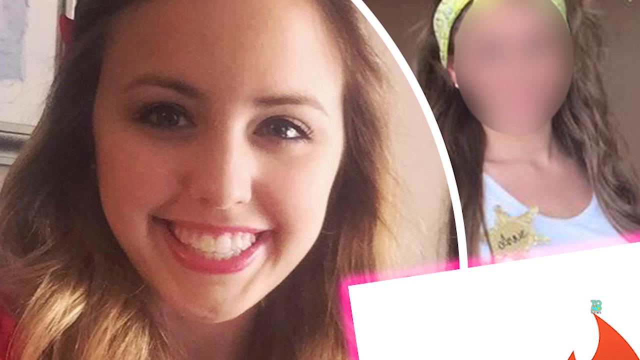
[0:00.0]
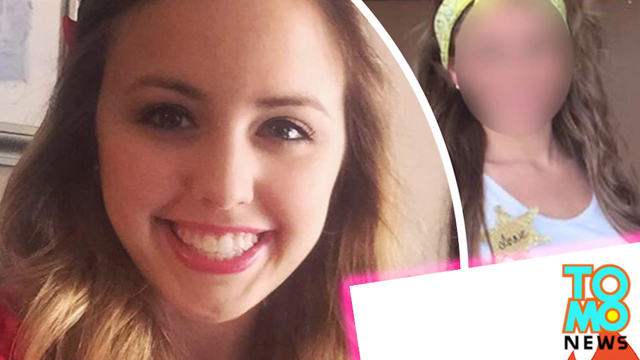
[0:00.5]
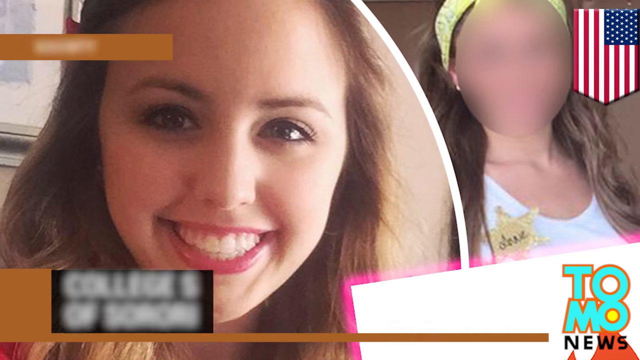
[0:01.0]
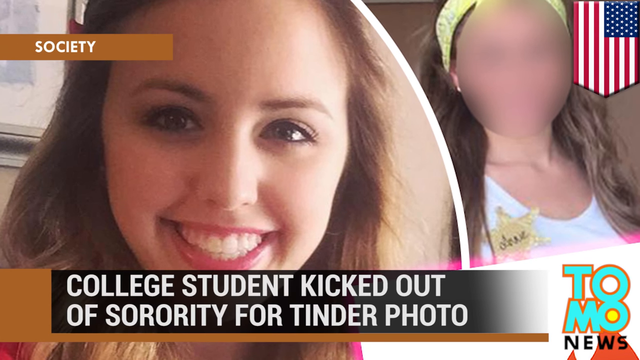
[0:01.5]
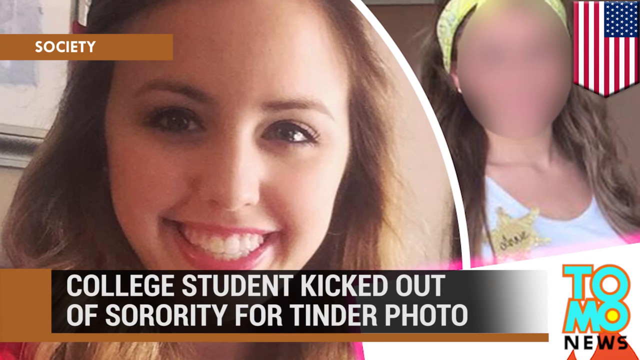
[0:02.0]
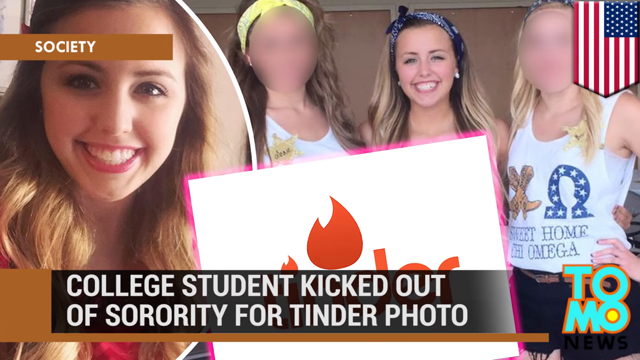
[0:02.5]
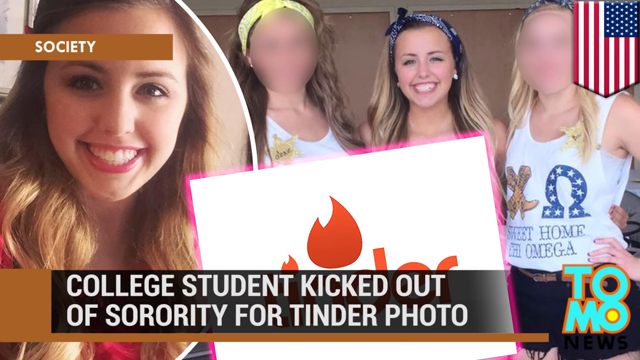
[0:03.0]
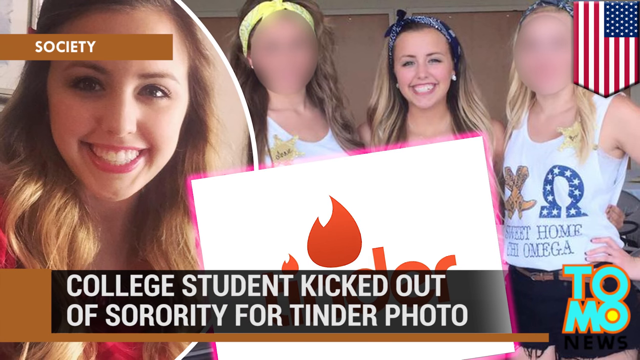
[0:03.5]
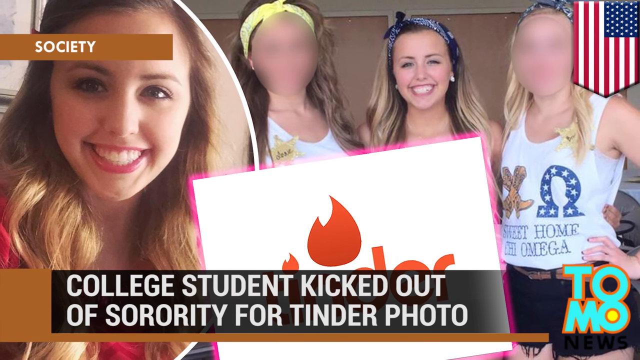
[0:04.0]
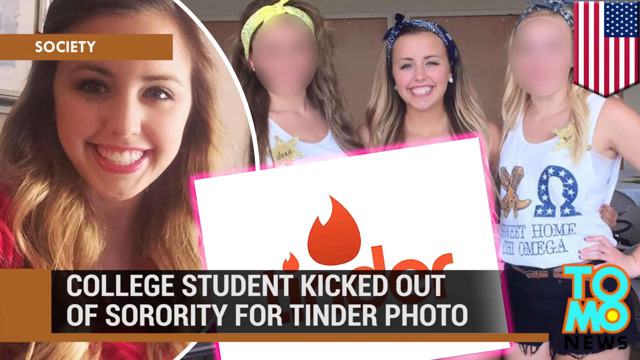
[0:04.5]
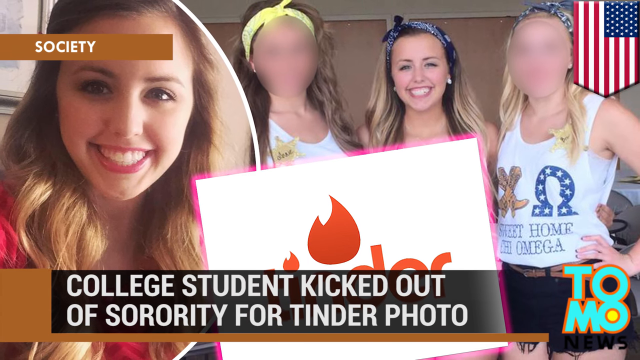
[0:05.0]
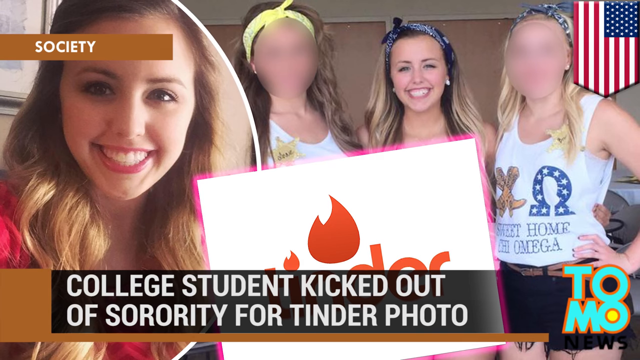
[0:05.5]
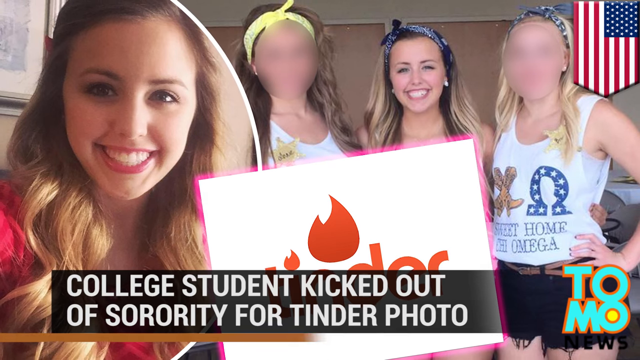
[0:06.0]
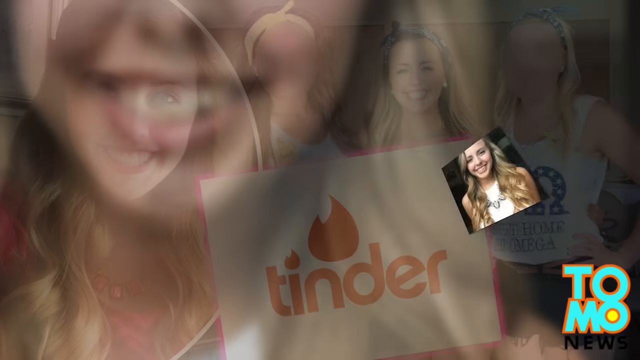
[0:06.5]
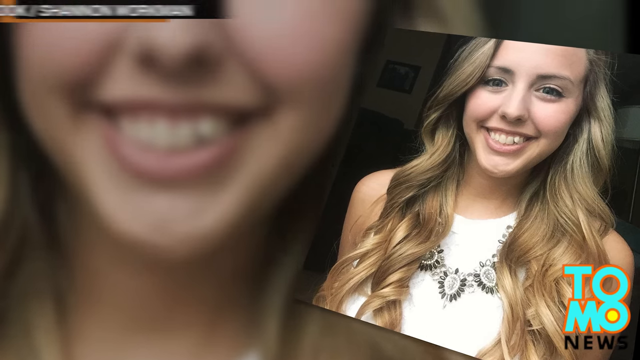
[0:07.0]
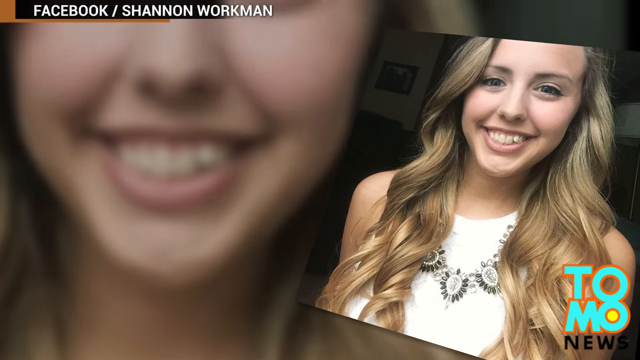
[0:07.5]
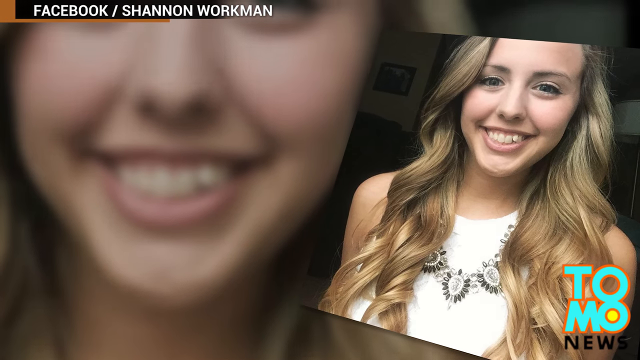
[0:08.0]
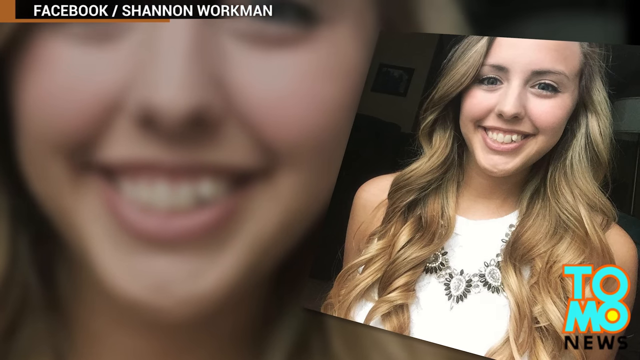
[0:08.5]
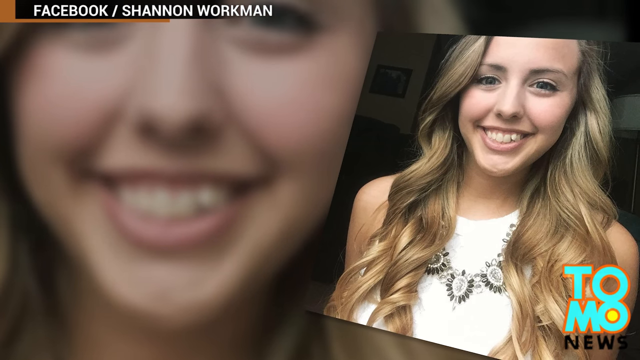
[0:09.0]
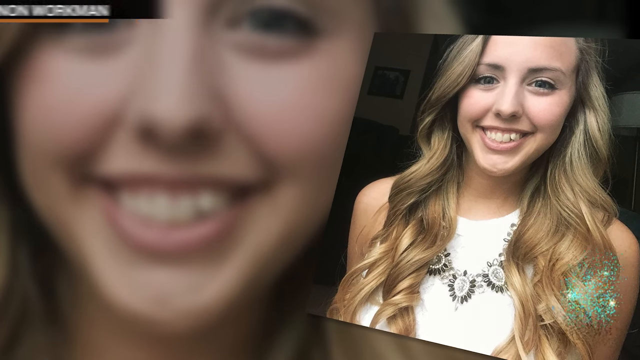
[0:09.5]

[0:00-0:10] A photo of a young woman appears with a banner below her face that reads "college student kicked out of sorority for Tinder photo." Next comes a group picture of her with some other young girls, then another photo of just her, so the video moves through a series of different photos. The website or news station reporting the story is called Tomo, and its logo is in the lower right portion of the screen: turquoise, outlined in what looks like an orange color.